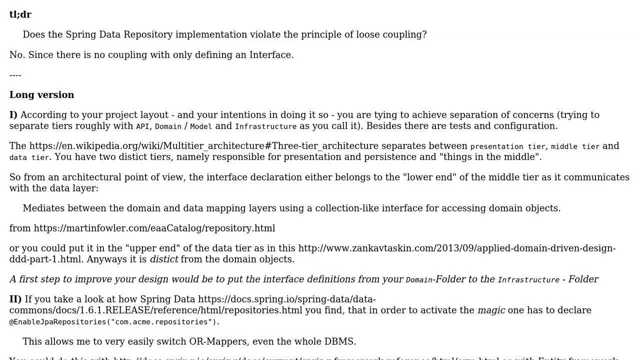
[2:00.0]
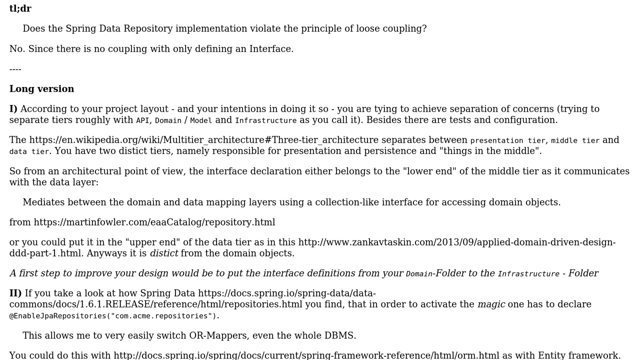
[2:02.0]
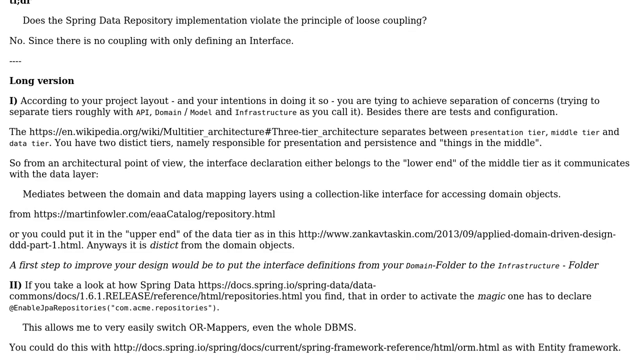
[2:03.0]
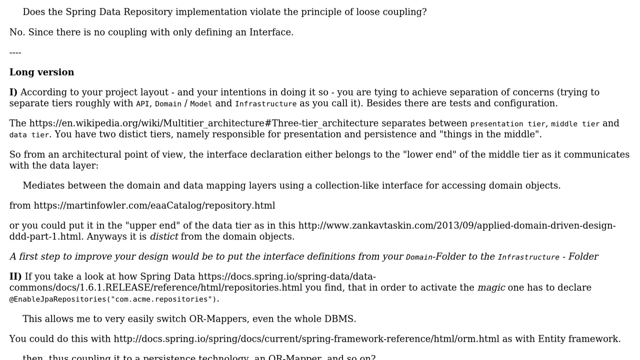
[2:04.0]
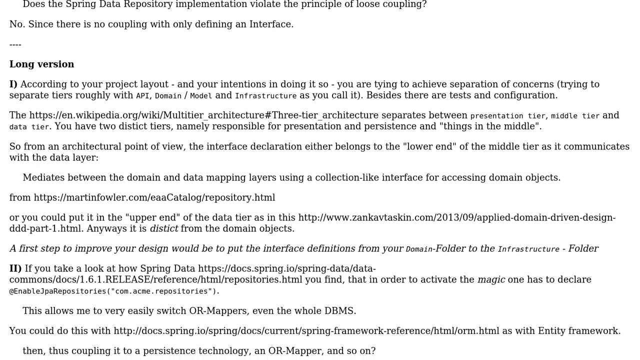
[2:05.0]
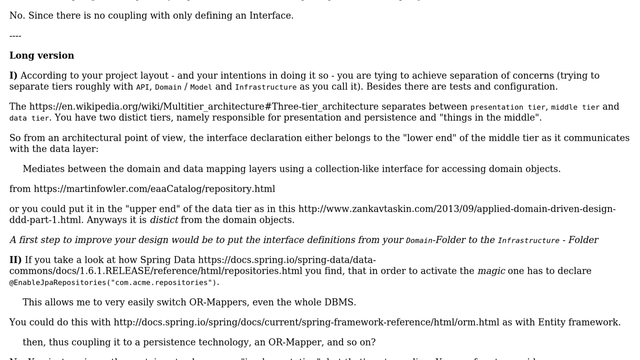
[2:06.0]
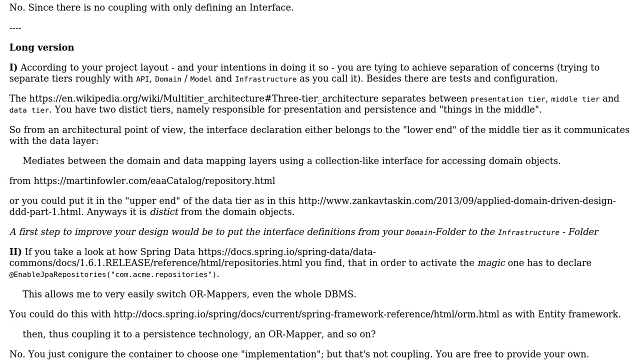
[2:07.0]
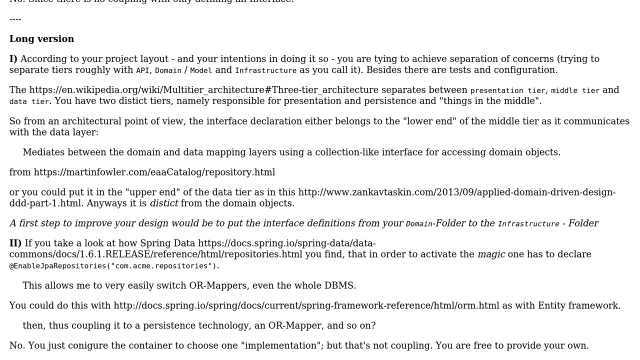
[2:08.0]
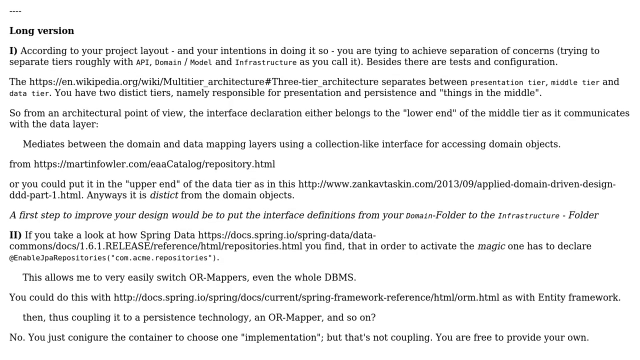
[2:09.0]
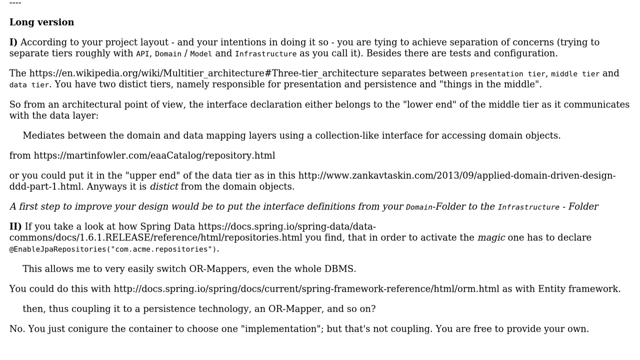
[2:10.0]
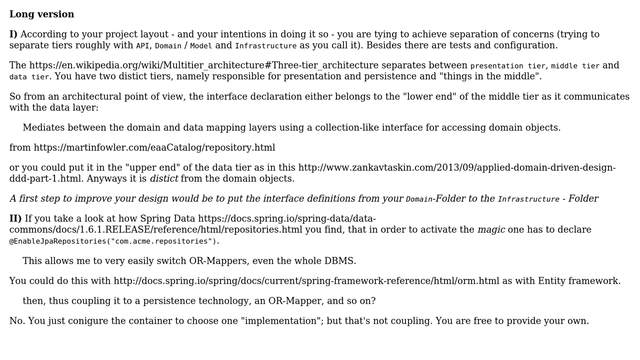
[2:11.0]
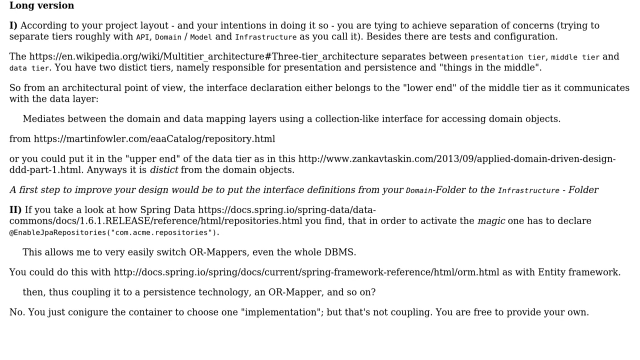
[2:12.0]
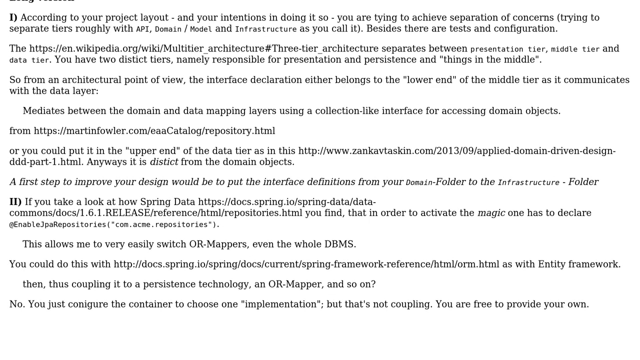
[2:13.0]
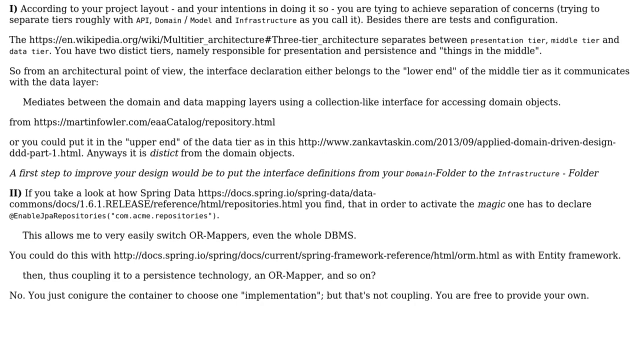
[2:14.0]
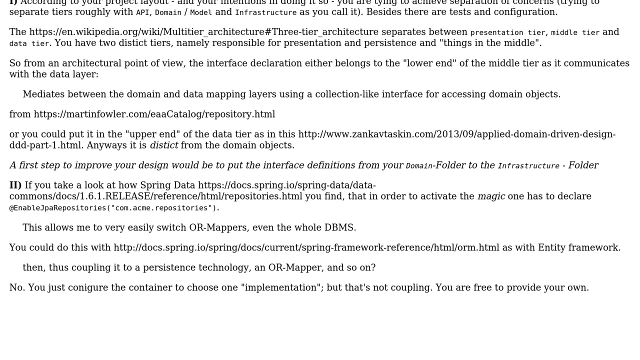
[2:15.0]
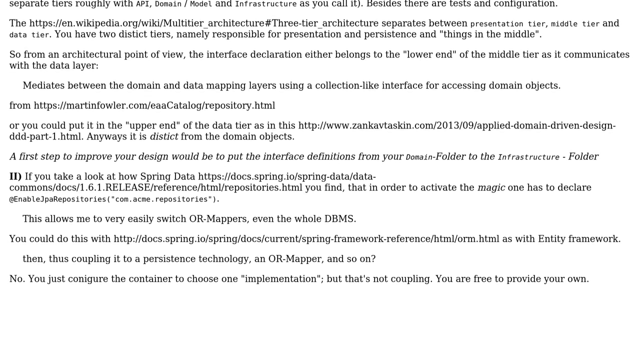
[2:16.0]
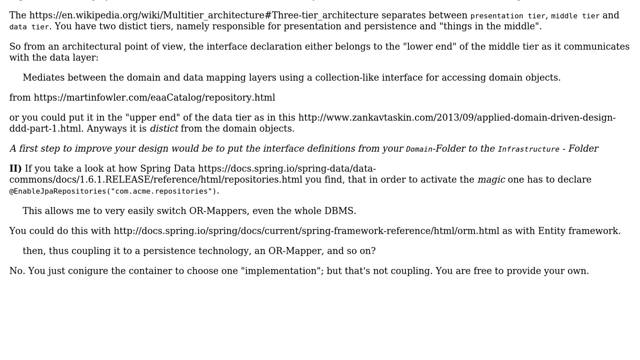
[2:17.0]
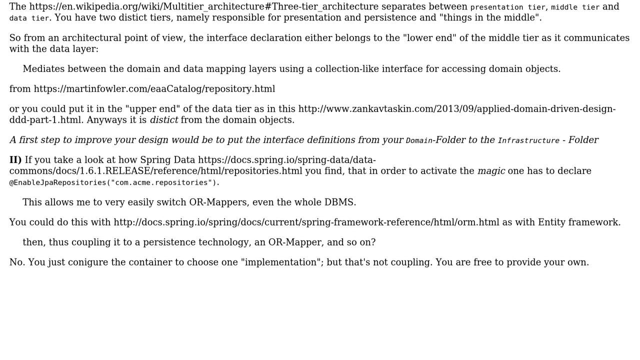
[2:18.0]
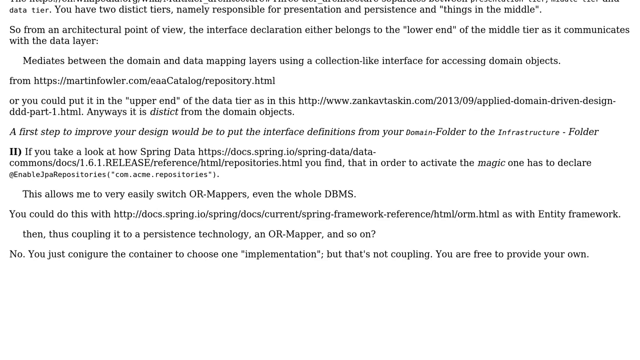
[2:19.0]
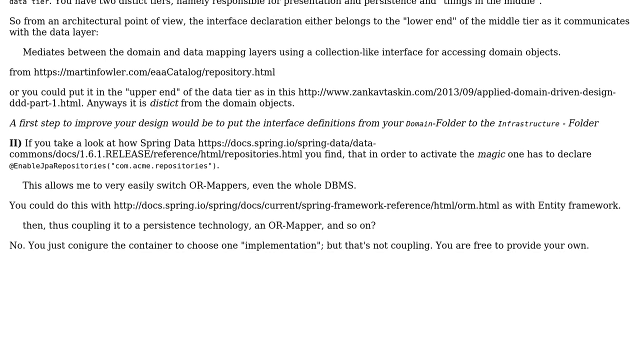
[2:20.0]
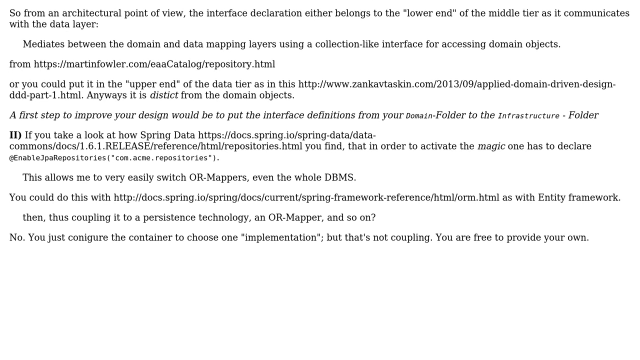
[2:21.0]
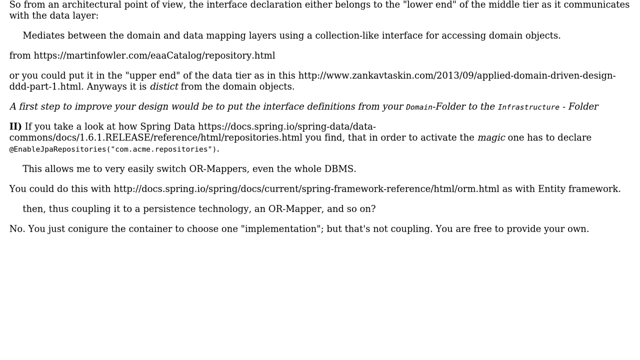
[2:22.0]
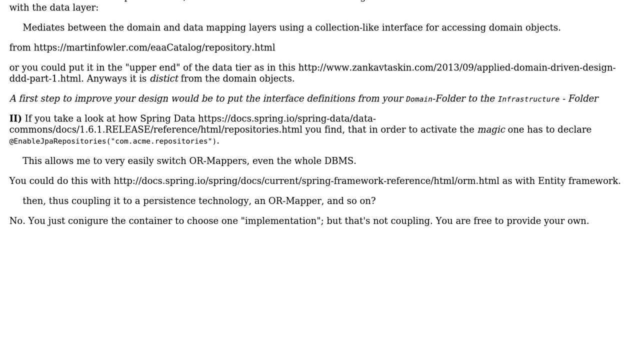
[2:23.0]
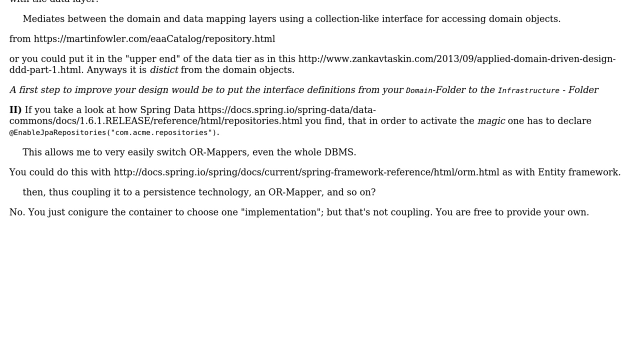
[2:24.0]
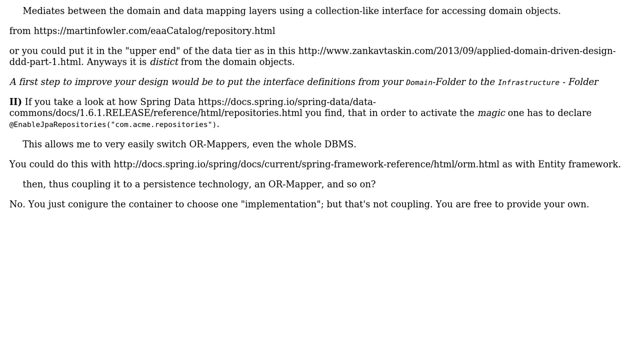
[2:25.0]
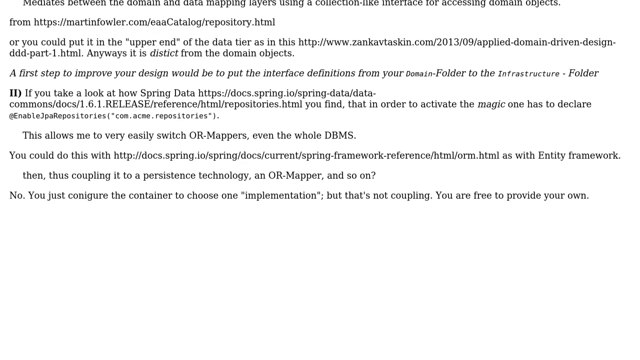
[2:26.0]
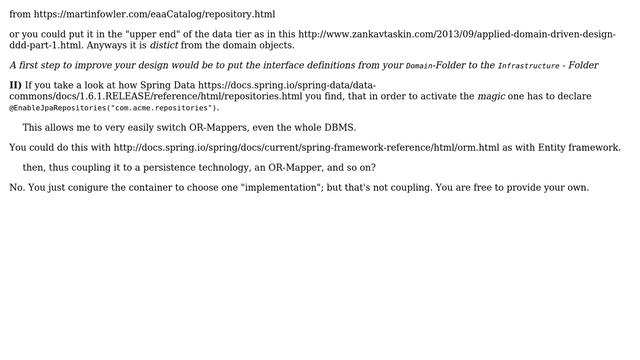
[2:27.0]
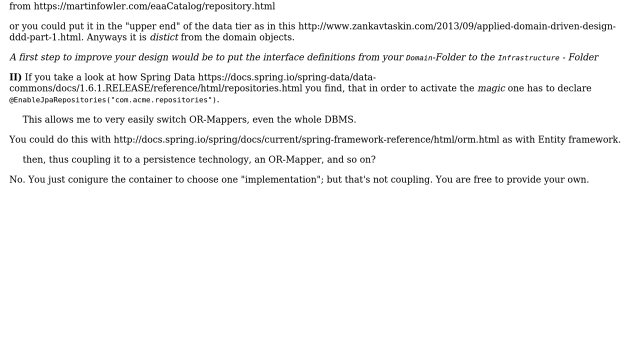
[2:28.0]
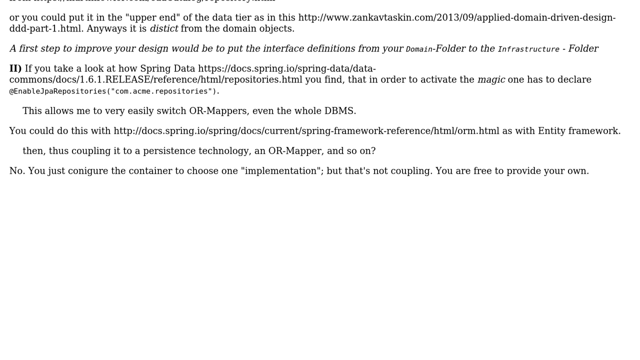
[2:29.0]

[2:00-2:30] The response text scrolls slowly. It includes a Wikipedia link about multitier architecture and says it "separates between presentation tier, middle tier and data tier. You have two distinct tiers, mainly responsible for presentation and persistence and "things in the middle"". It discusses whether the interface declaration belongs to the "lower end of the middle tier" or the "upper end of the data tier", with links to martinfowler.com and zencavtaskin.com. It continues "Anyway, it is distinct from the domain objects. First step to improve your design would be to put the interface definitions from your domain folder to the infrastructure folder."